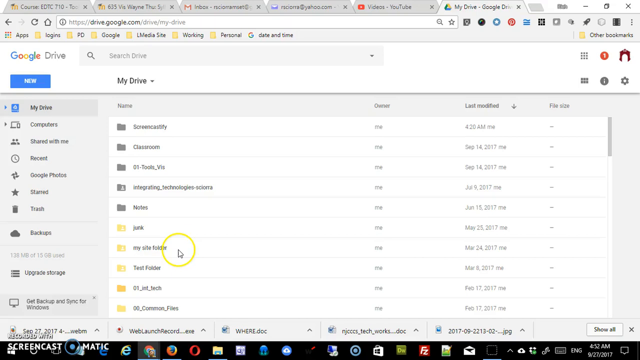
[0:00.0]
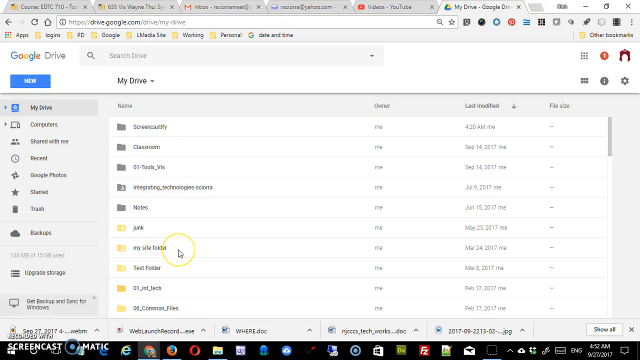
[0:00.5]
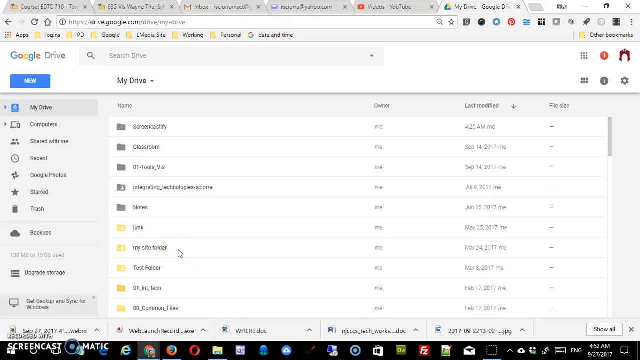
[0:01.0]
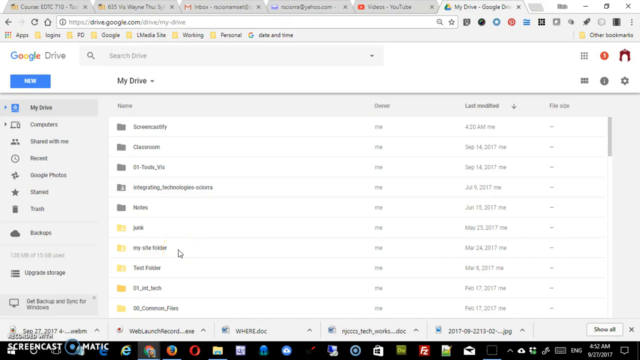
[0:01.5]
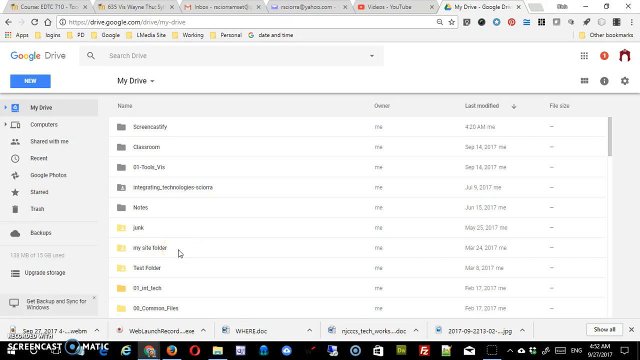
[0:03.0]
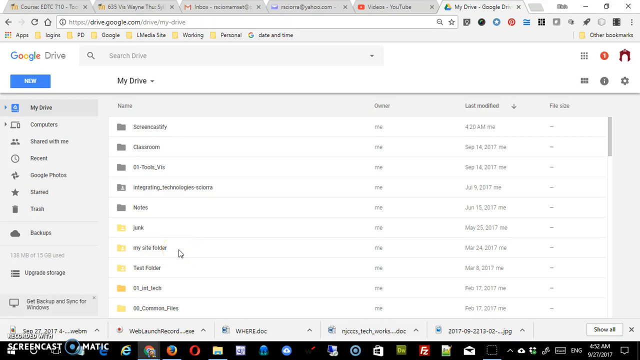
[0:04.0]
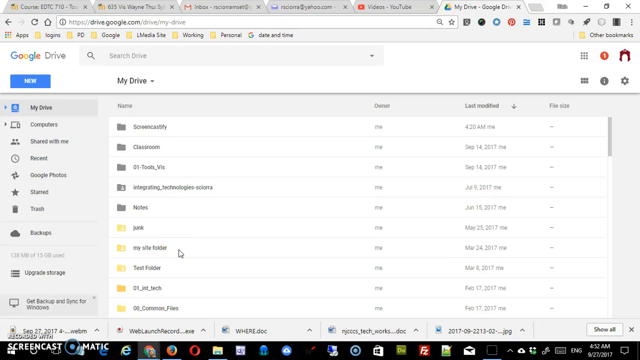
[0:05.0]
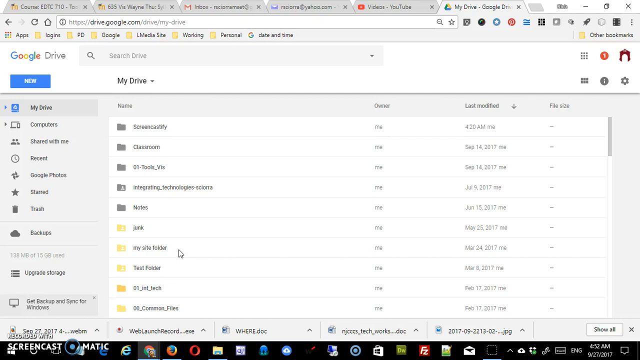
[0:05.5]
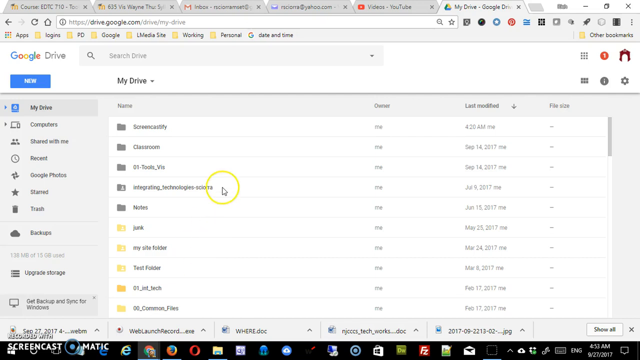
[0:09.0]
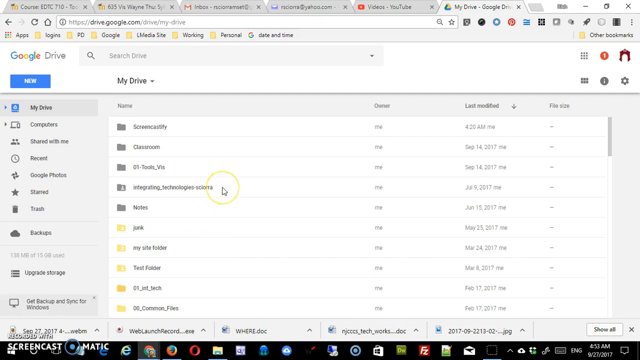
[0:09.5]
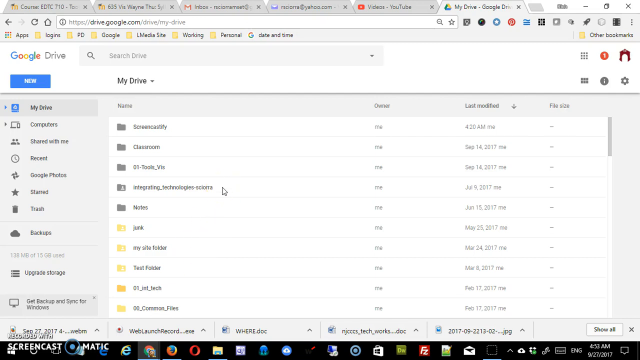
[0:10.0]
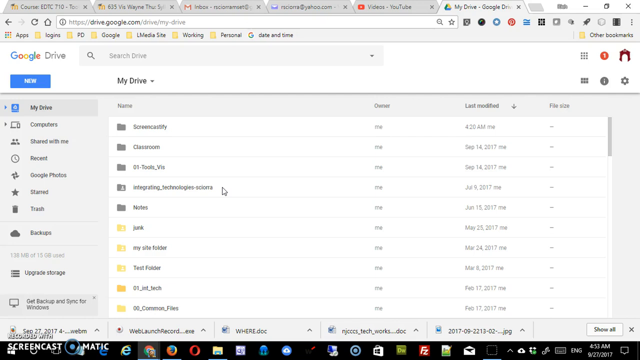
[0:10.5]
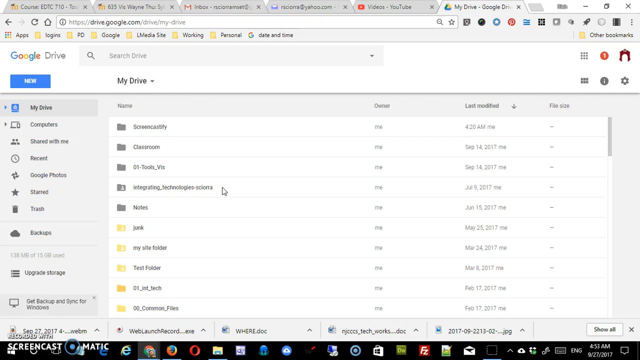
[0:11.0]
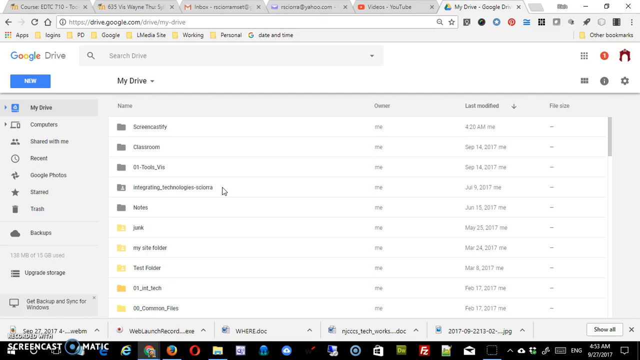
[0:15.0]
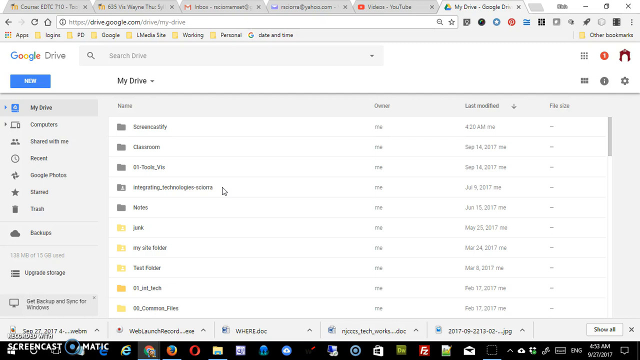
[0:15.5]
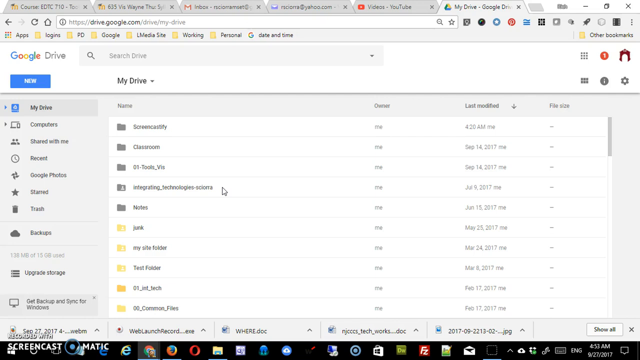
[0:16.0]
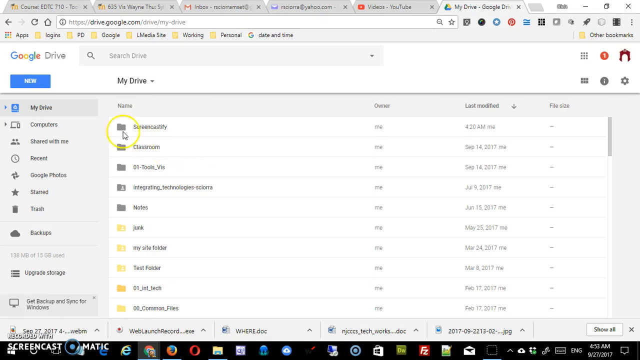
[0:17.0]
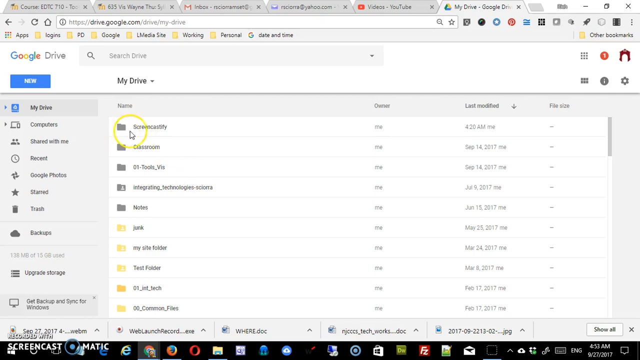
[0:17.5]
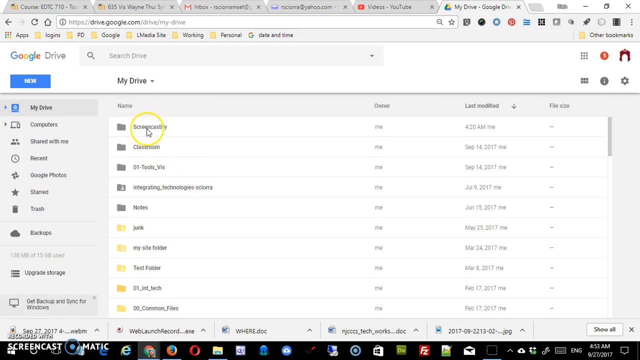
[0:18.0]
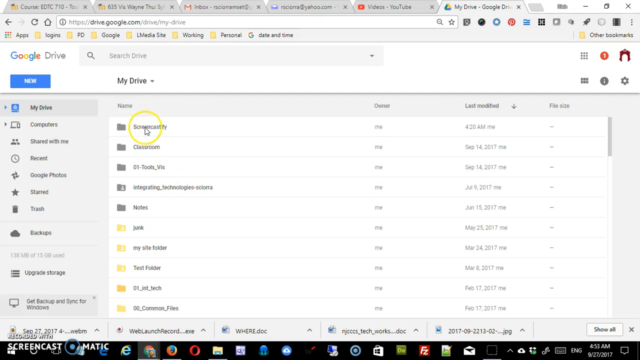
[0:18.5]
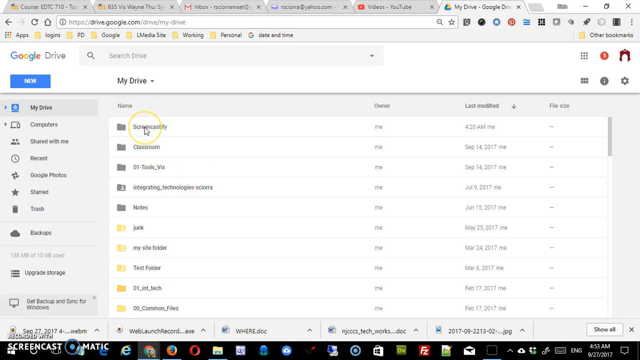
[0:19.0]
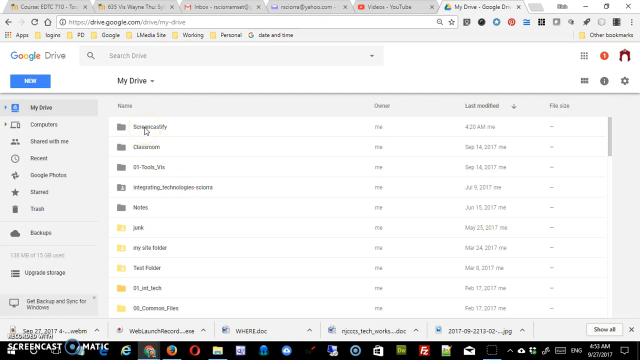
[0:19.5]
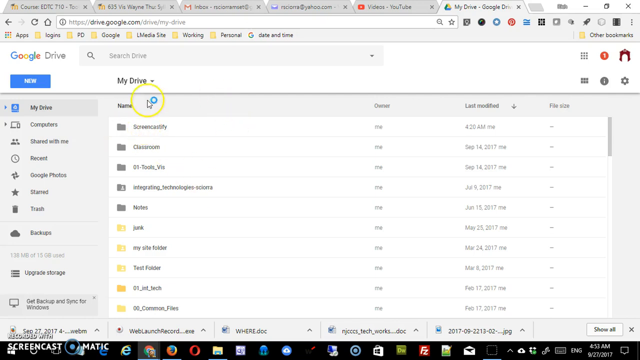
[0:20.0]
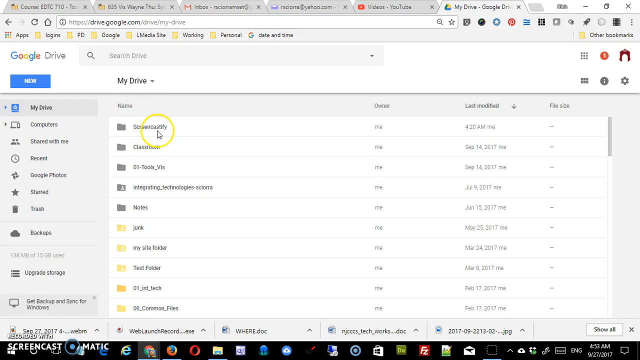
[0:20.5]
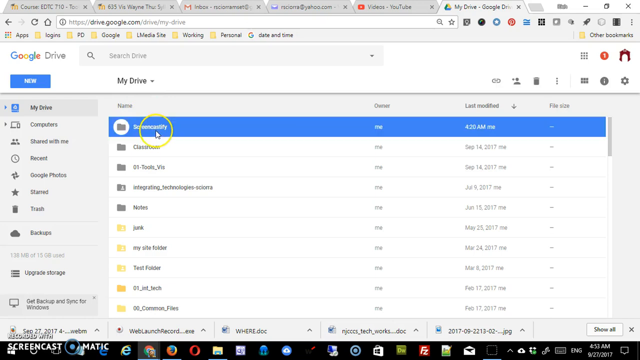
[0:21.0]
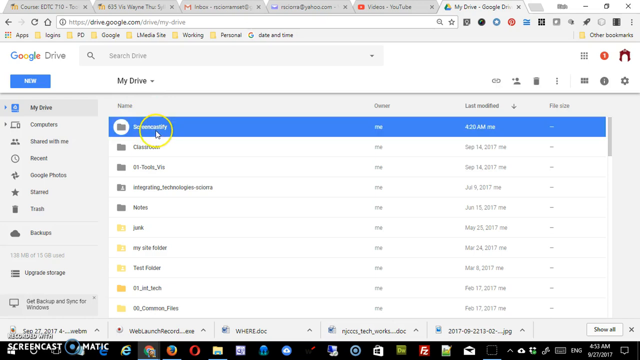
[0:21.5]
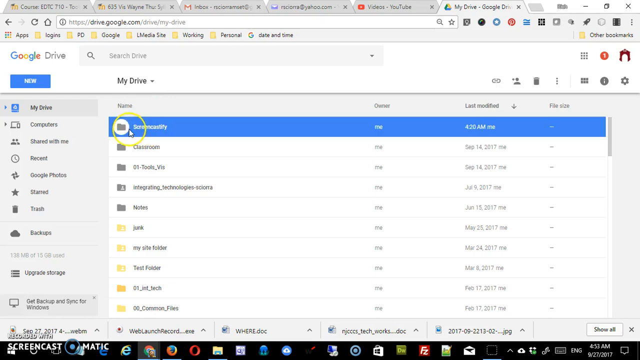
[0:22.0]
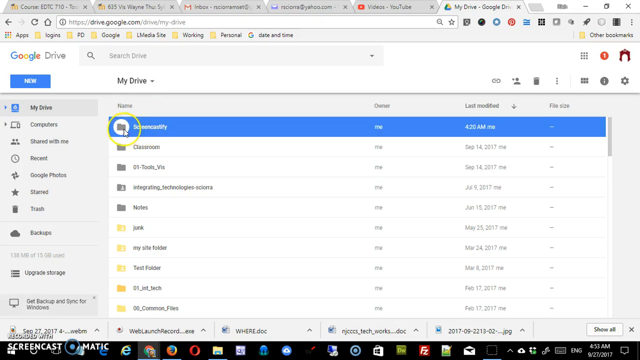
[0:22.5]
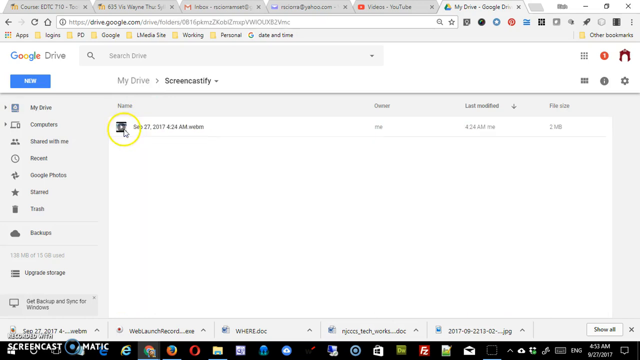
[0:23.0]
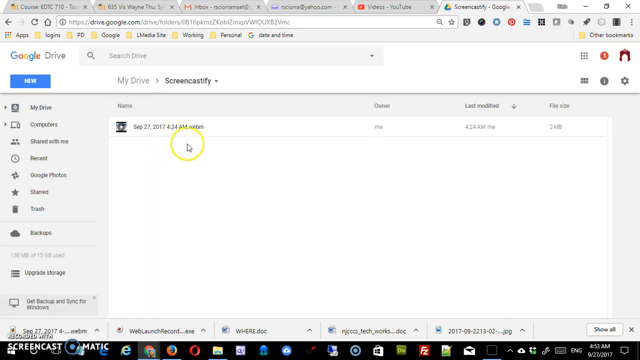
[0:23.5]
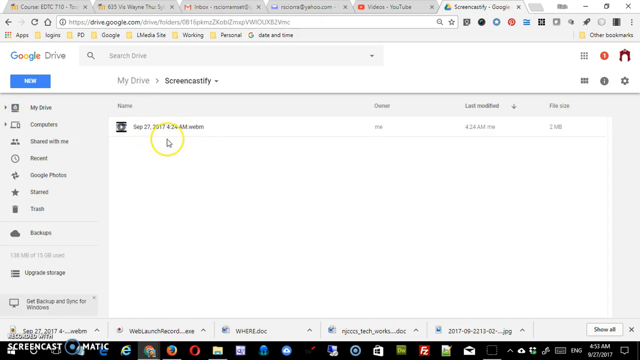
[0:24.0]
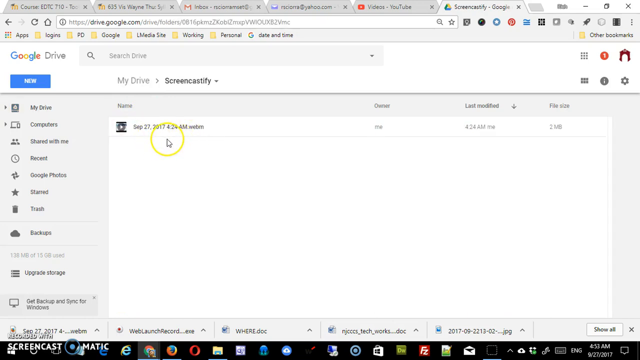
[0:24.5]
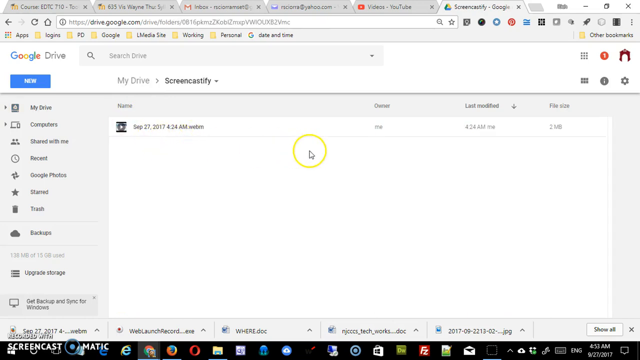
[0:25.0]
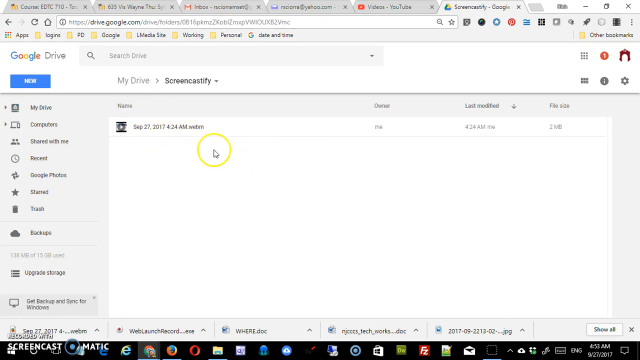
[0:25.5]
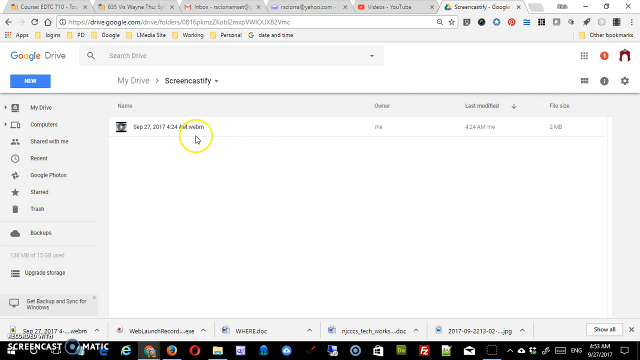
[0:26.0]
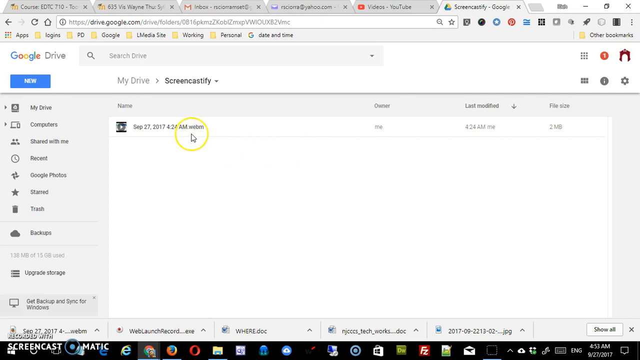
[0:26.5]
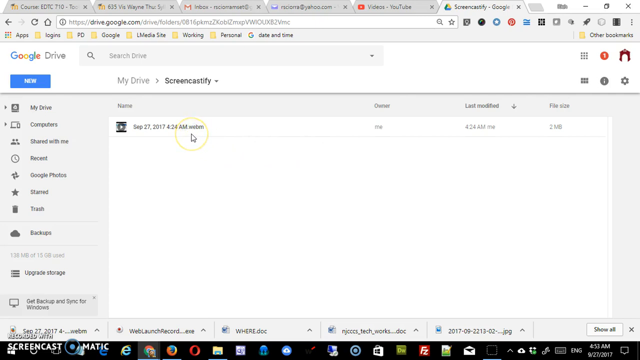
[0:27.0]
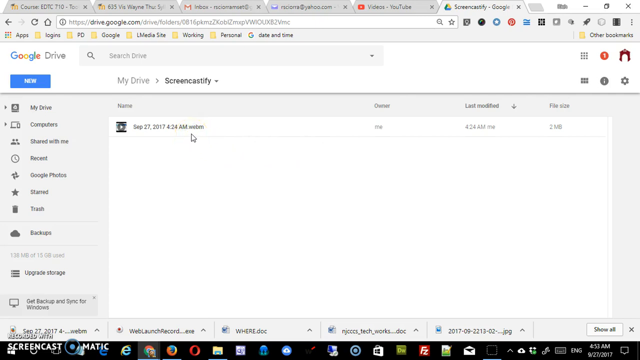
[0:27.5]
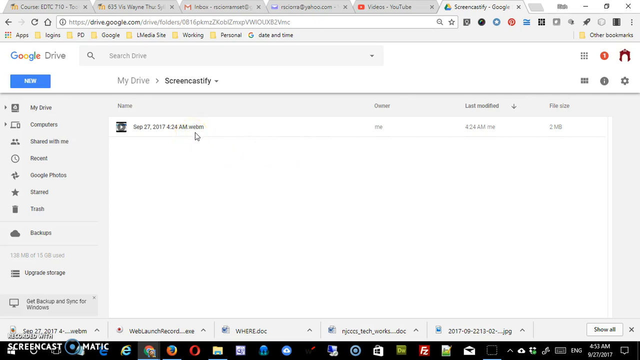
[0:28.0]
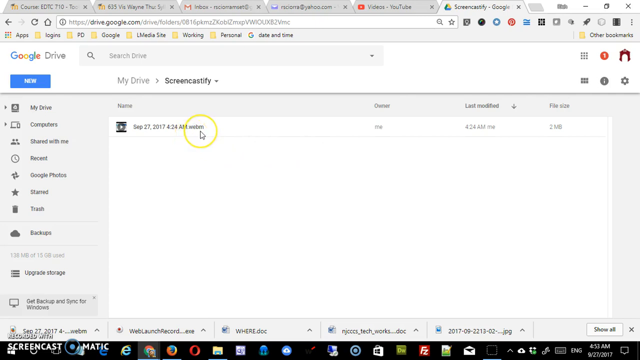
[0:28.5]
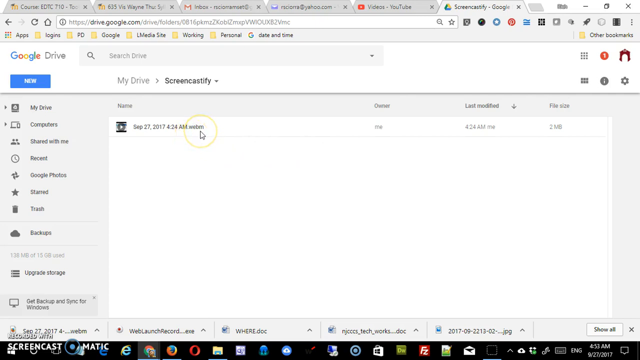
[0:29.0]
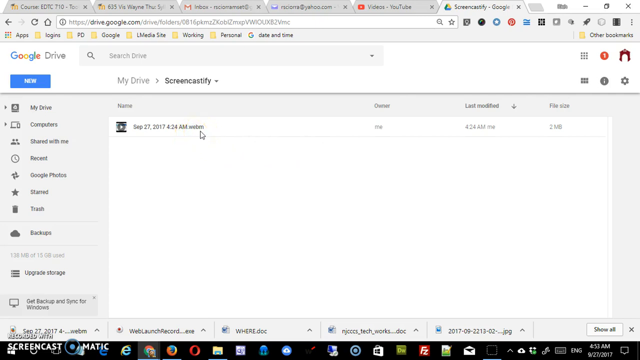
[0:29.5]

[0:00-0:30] The video opens on a screenshot of what may be a Windows Explorer tab or some other tab opened on a Windows page. The mouse moves around fairly erratically and clicks a couple of very small files on the page; the view is zoomed in so it is hard to see exactly what is being clicked. At least seven tabs are open along the top, but they are so small that only one, reading "my drive", can be made out. The window has a plain gray background, and the top left corner says "Google Drive", so this is apparently the Google Drive folder. A double toolbar runs across the top with only a few icons in it.